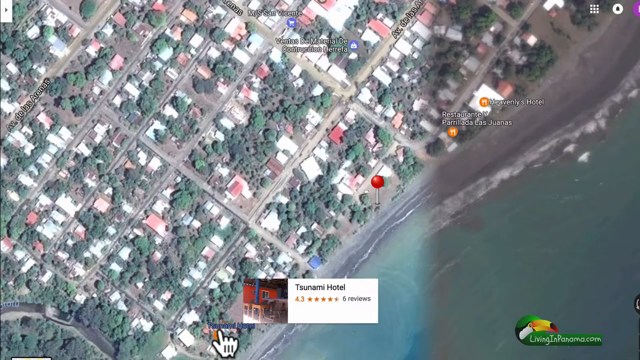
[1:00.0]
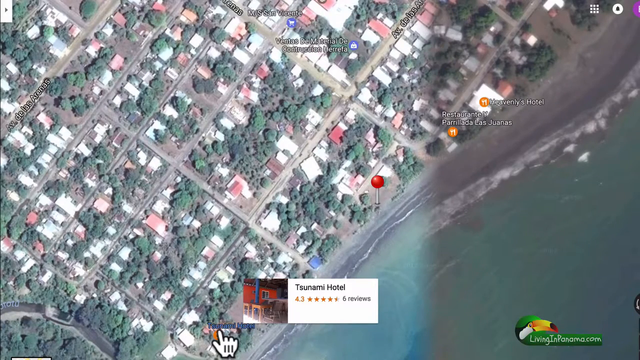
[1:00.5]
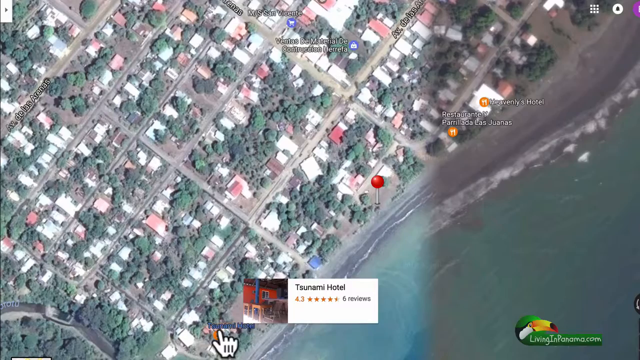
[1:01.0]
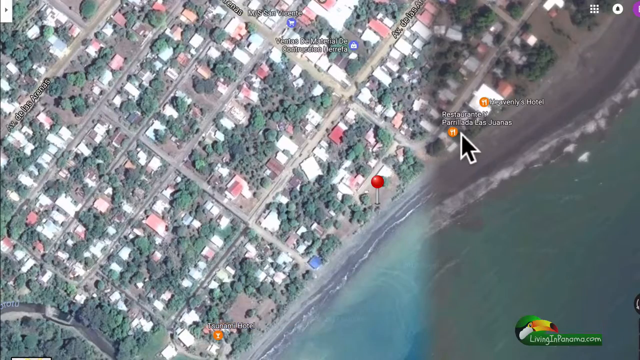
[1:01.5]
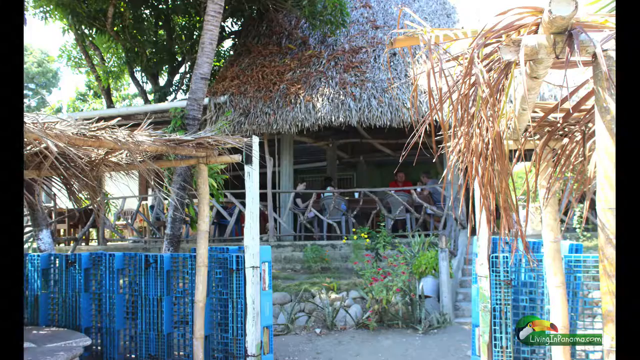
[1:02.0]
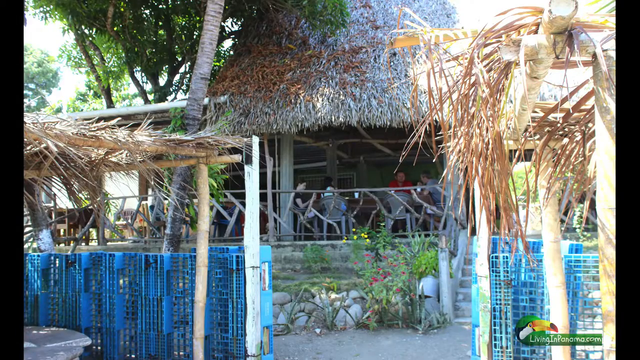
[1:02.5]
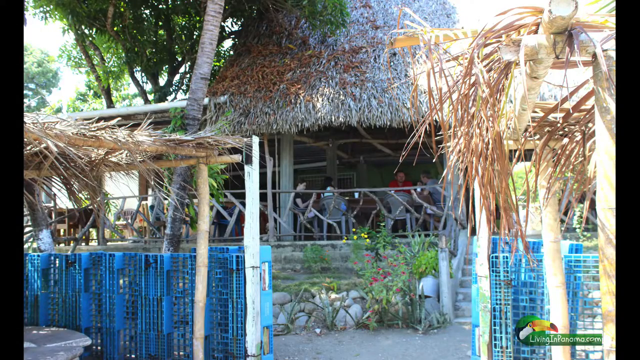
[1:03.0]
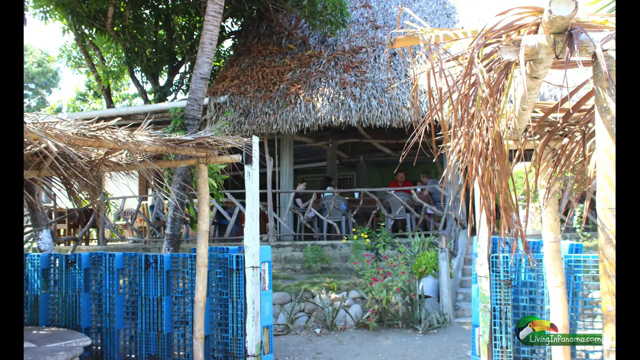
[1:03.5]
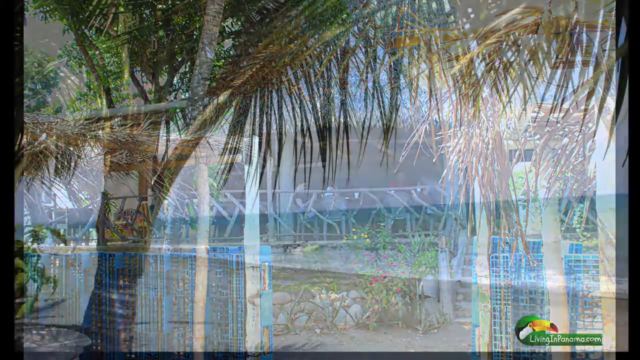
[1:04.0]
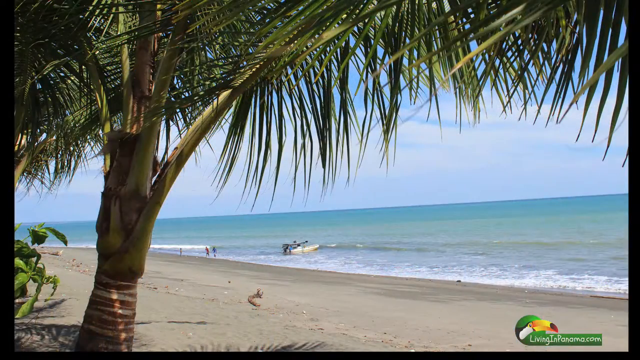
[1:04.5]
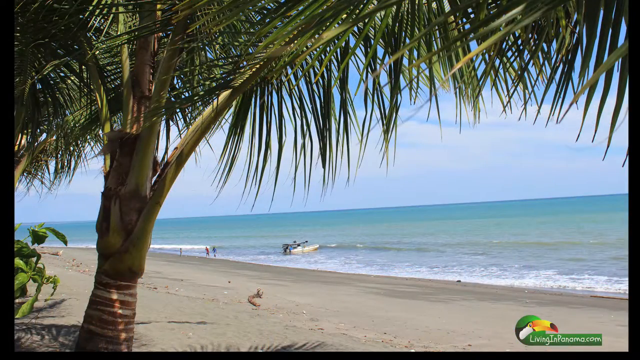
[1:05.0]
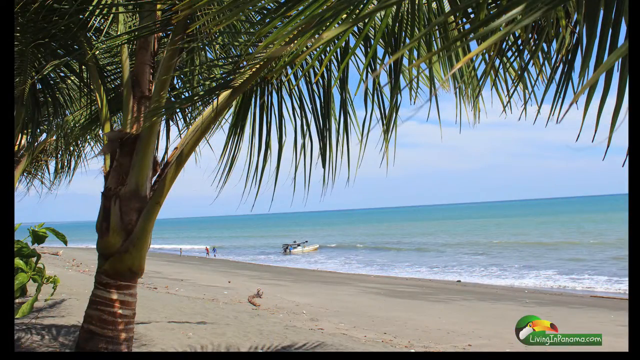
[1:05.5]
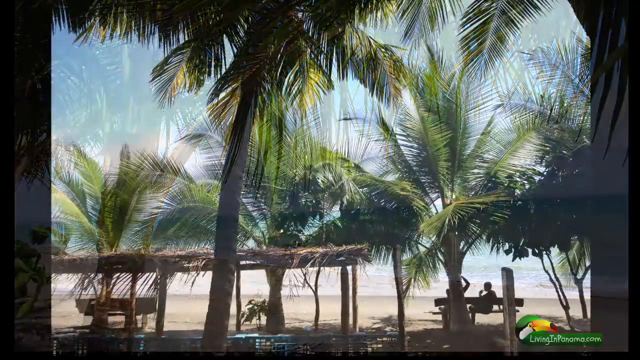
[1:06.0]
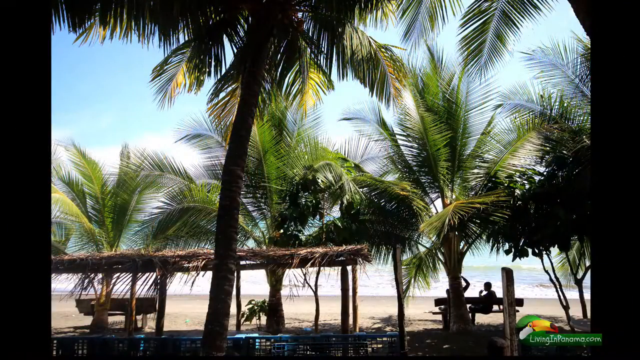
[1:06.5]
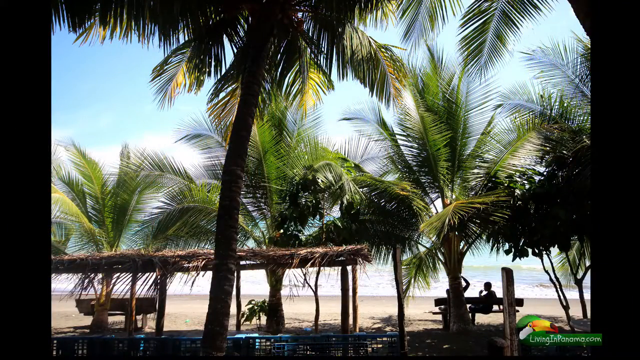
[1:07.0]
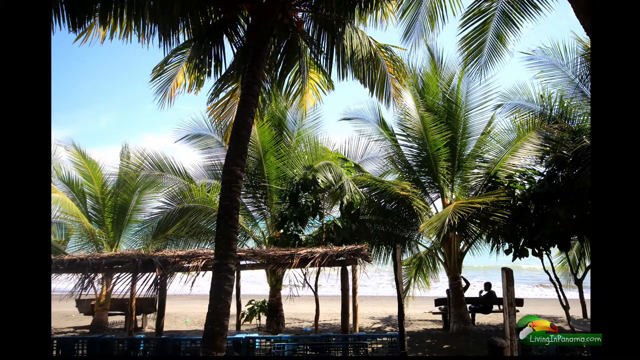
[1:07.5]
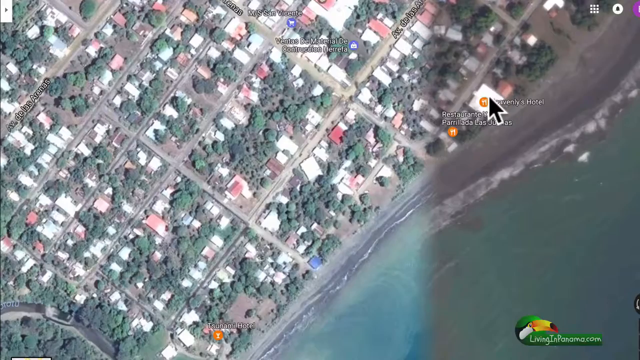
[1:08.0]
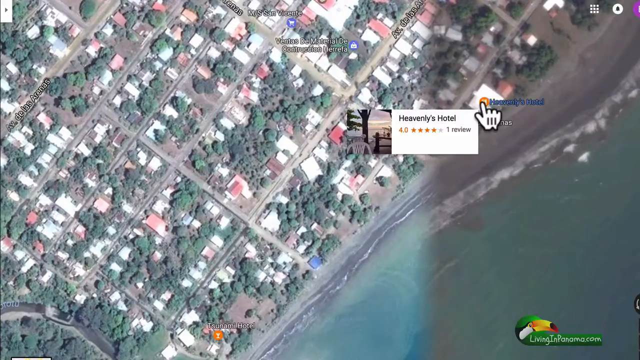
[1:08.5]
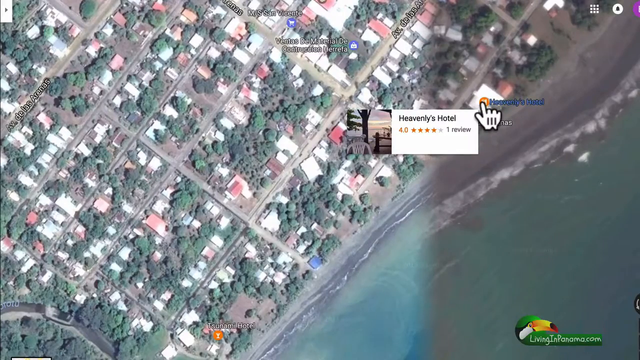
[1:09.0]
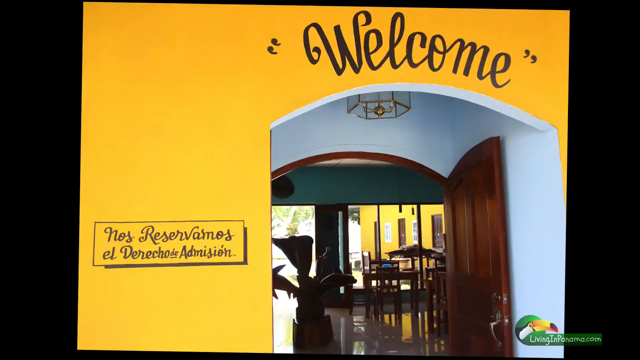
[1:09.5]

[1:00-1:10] On the Google Maps image the words "tsunami hotel" are visible and the black arrow moves around. A picture of a grass-roofed hut follows, then an image of the beach with a large palm tree in the forefront, what looks like a speed boat on the beach, and a few people walking along the beach. Lots of images of palm trees on the beach front with the sand follow. It goes back to a Google image where the arrow points to Heavenly's Hotel, a four-star hotel, and then to an image of a room entrance with "welcome" above it and the wall painted yellow.